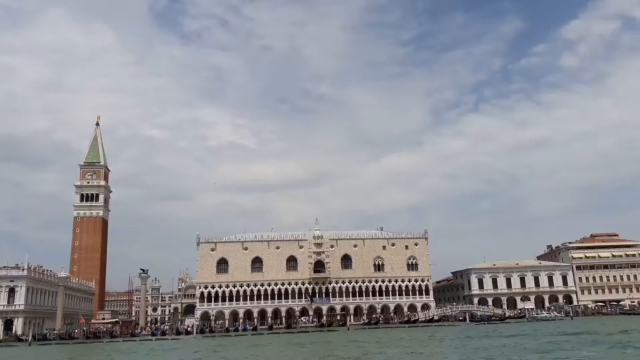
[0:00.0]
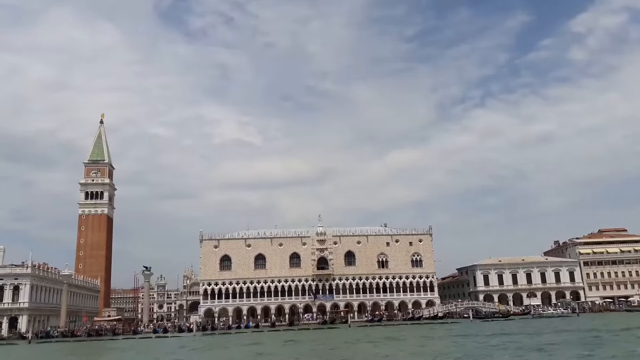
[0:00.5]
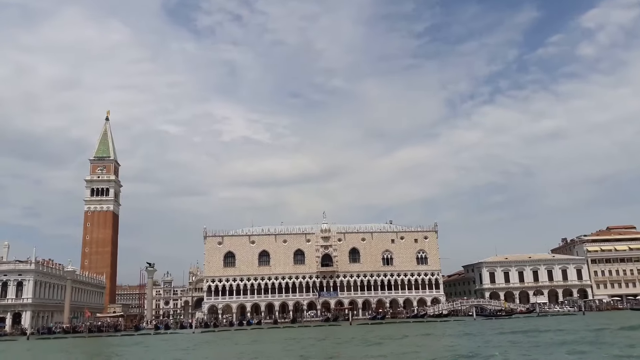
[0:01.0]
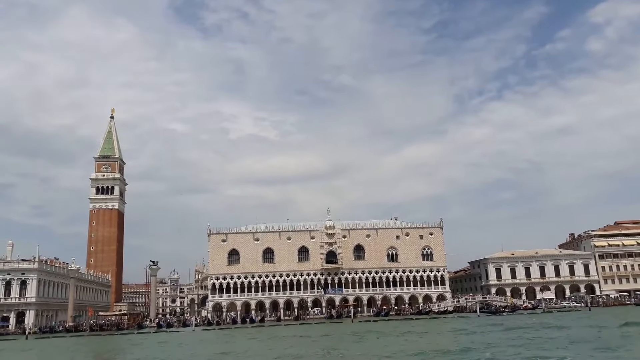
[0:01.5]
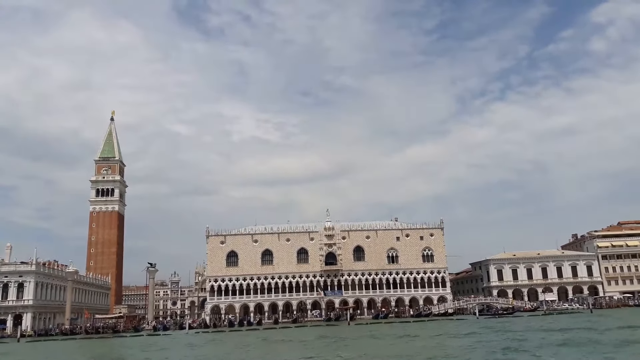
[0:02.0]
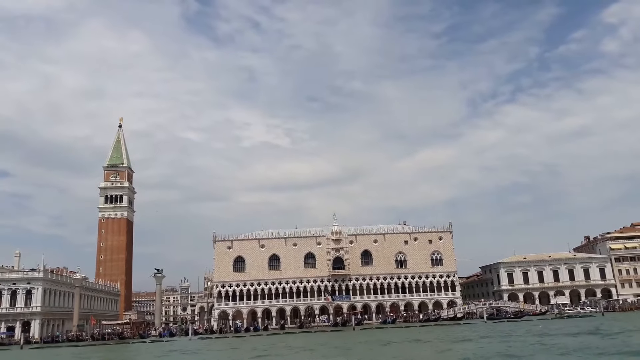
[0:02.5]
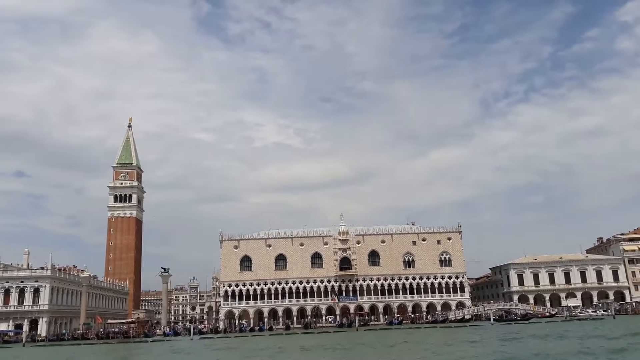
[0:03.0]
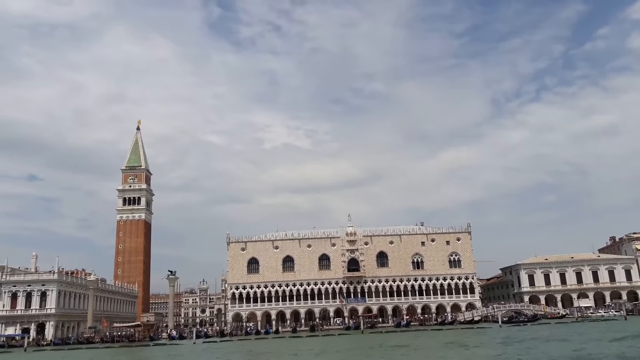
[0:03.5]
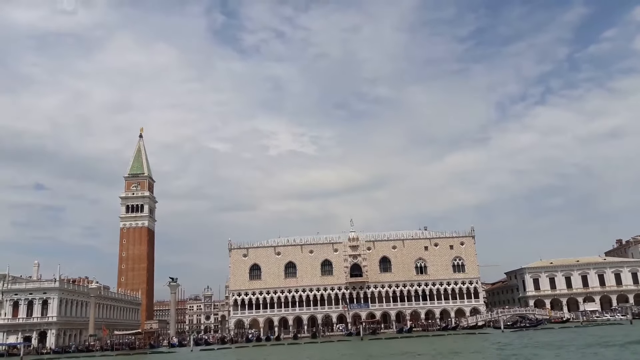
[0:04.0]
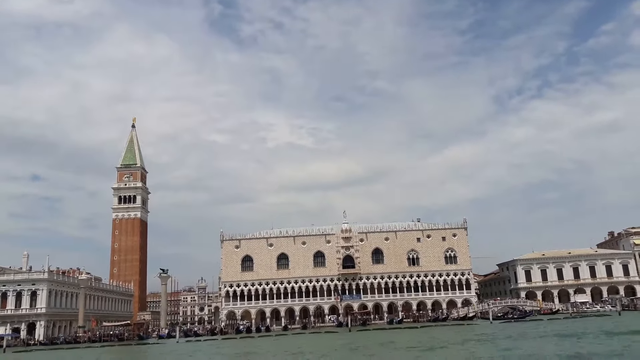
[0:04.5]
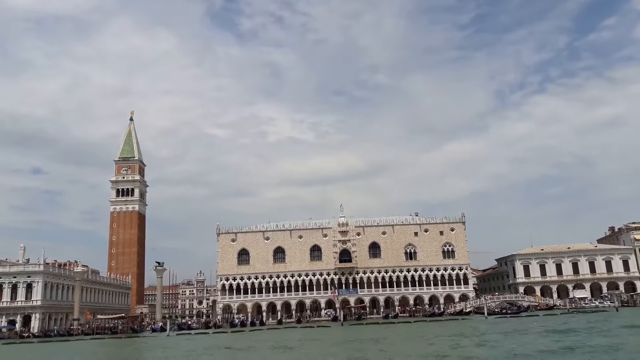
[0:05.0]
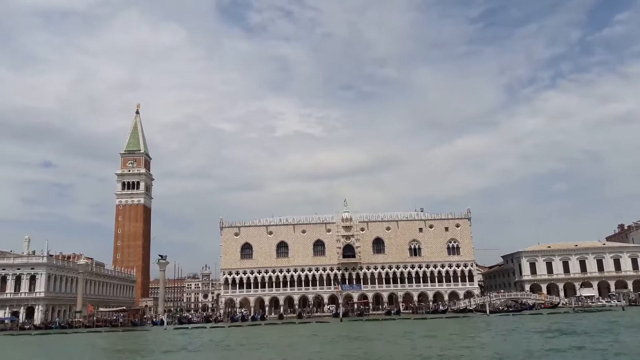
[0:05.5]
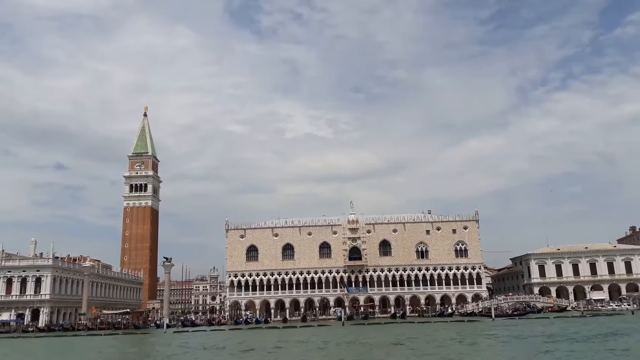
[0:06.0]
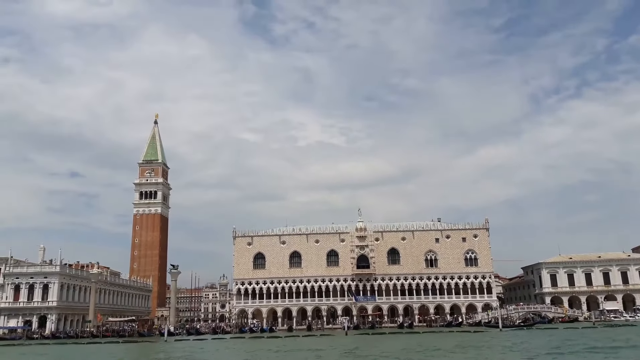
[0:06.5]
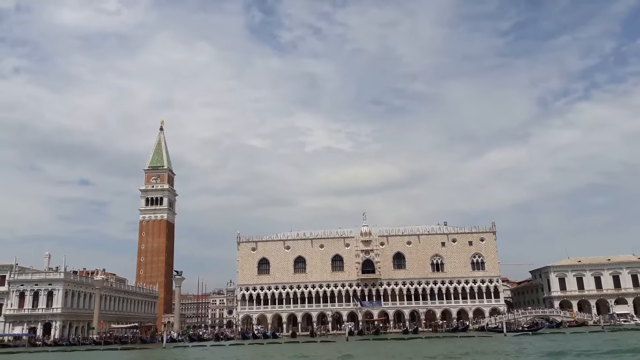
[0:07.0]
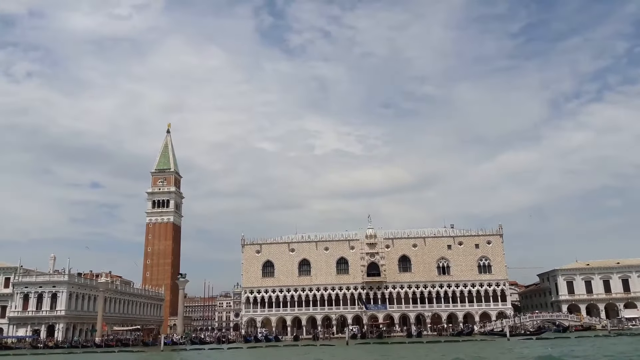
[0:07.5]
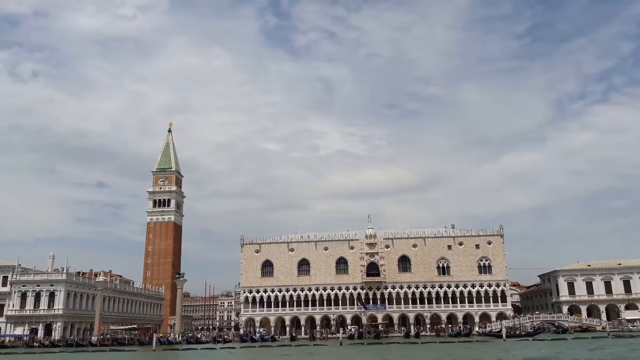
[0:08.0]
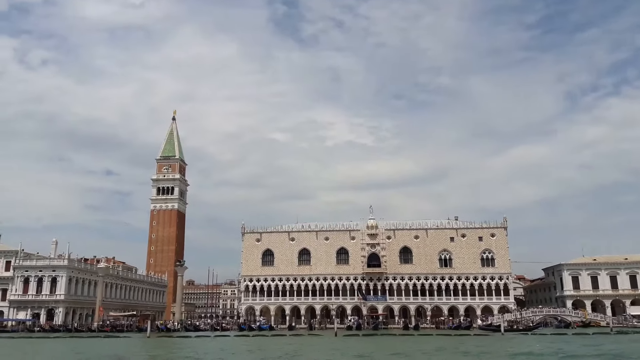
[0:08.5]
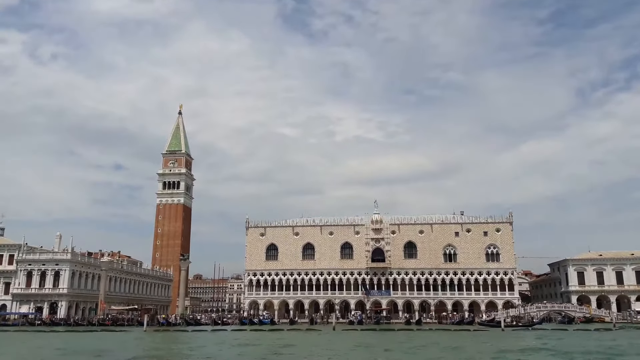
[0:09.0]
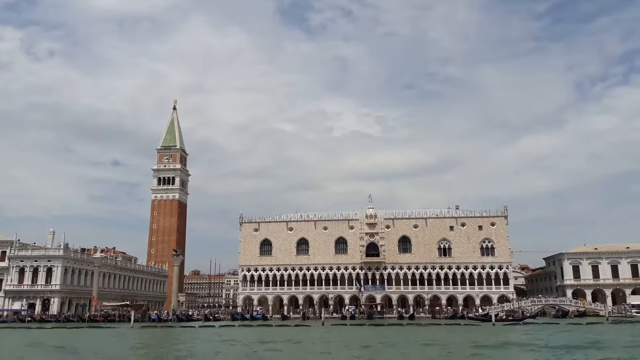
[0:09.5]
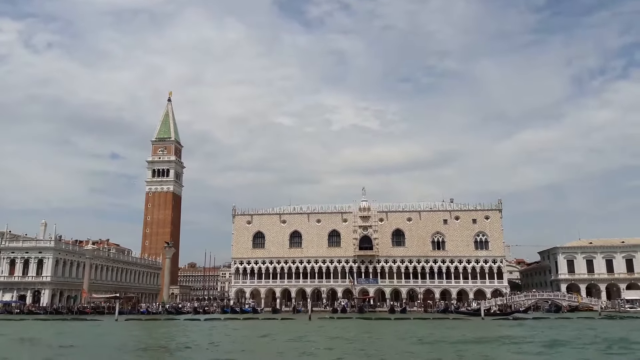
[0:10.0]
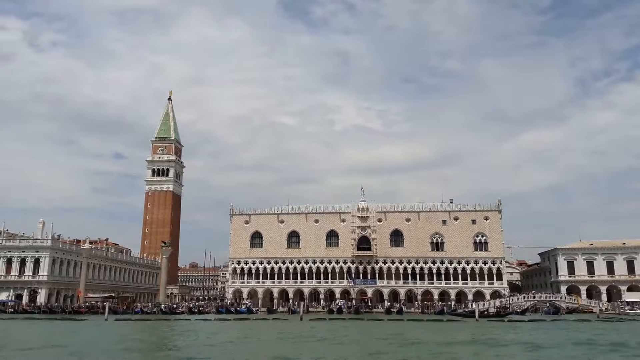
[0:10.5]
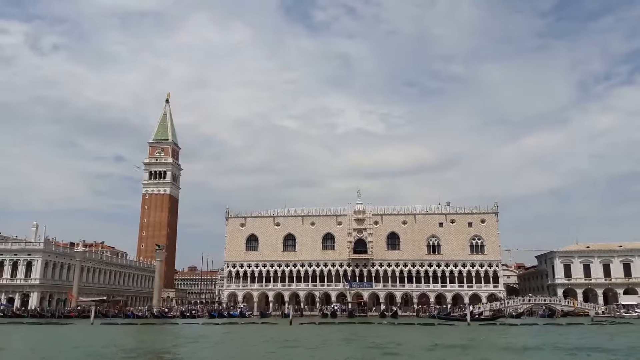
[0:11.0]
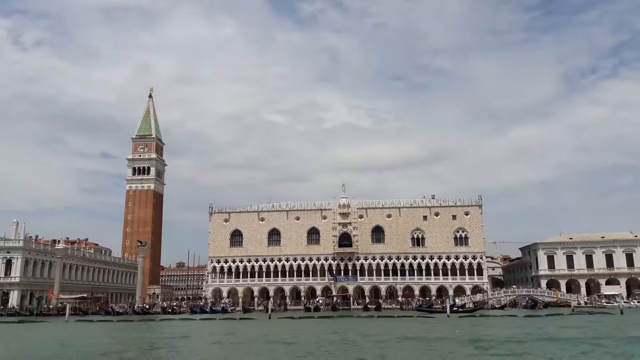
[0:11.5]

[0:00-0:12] The view is from the water, looking at the outside of what appears to be a very beautiful city. In front is a building with many arches and openings; it has seven windows, one primarily in the middle, and intricate details on its front. There also appears to be a tower on the left-hand side, and on the right-hand side there is another shorter building that is not as high as the building in the middle. The viewpoint passes up and down through the water, moving kind of slowly. There appear to be many people walking around the area, on a sidewalk near the large building in the center of the screen, and the water appears to be moving. The sky is blue with some clouds, but it does not look like it is going to rain.